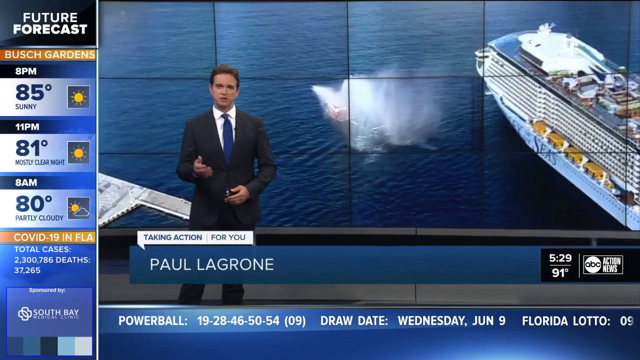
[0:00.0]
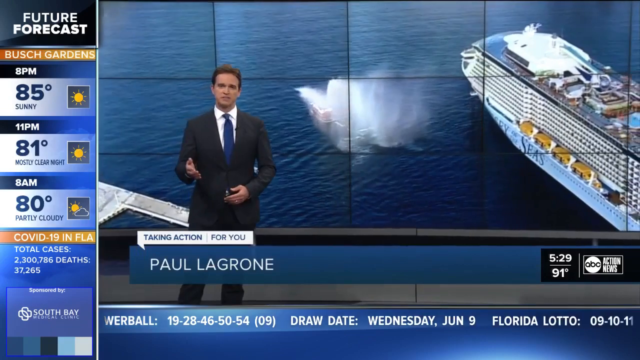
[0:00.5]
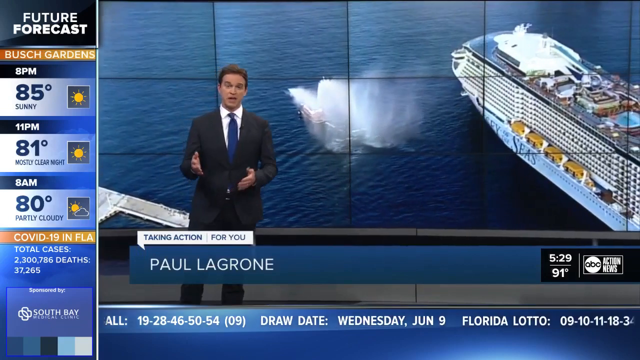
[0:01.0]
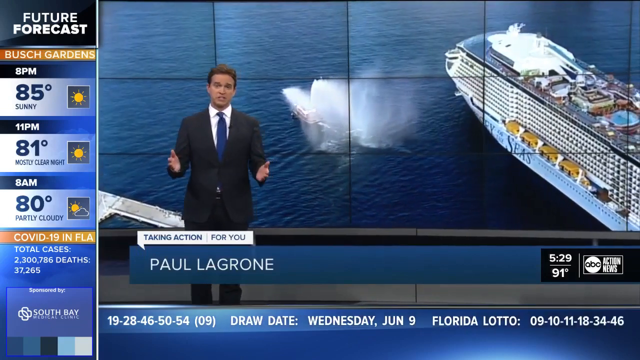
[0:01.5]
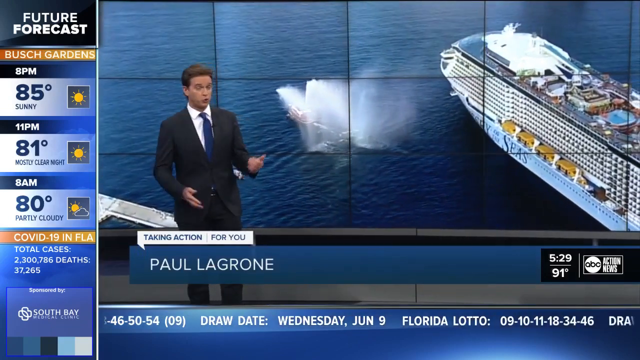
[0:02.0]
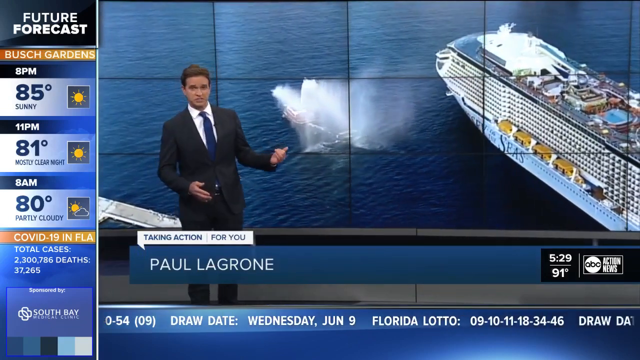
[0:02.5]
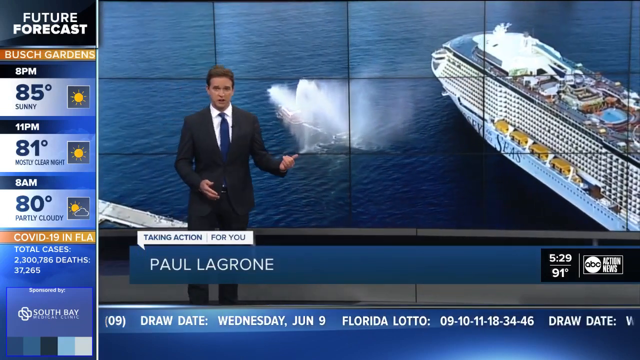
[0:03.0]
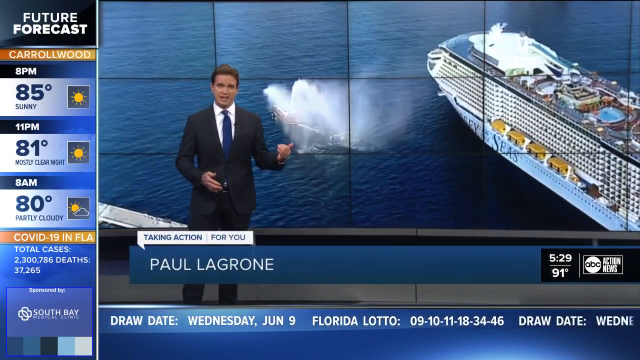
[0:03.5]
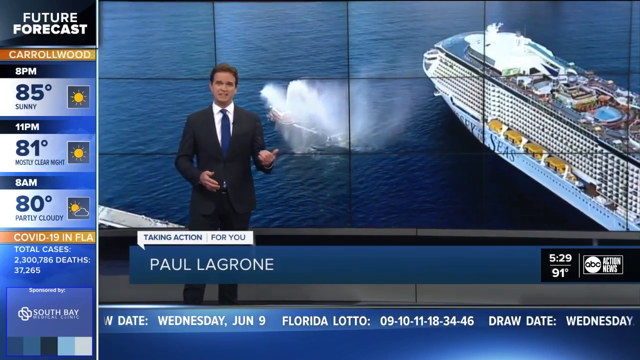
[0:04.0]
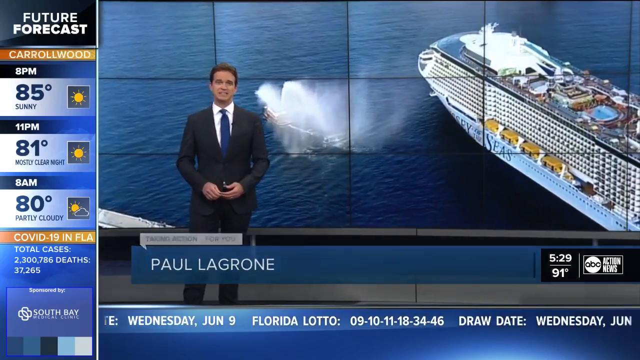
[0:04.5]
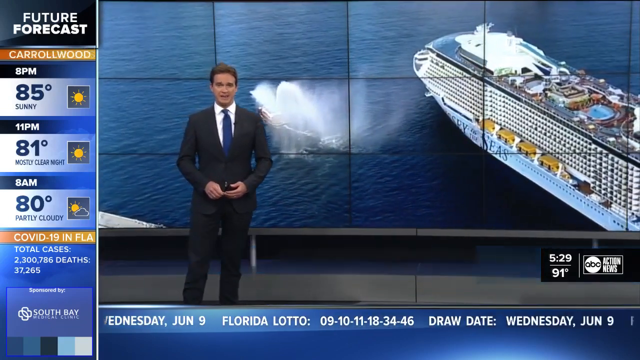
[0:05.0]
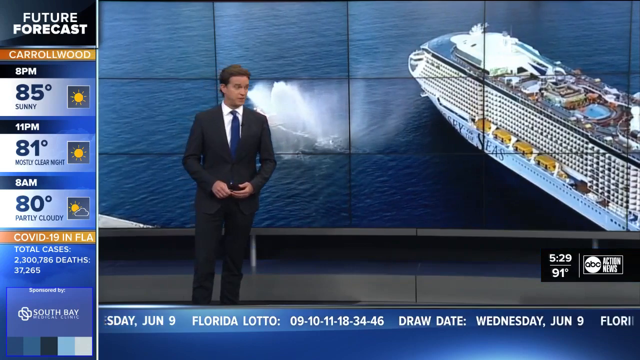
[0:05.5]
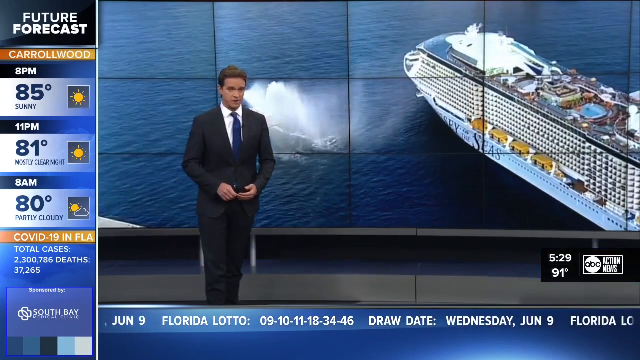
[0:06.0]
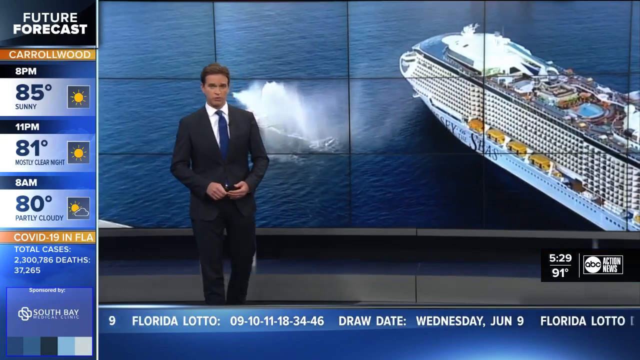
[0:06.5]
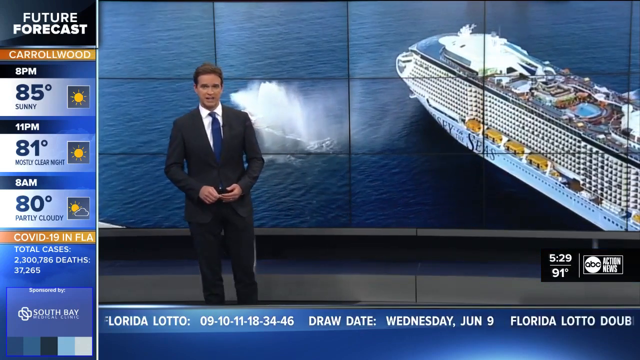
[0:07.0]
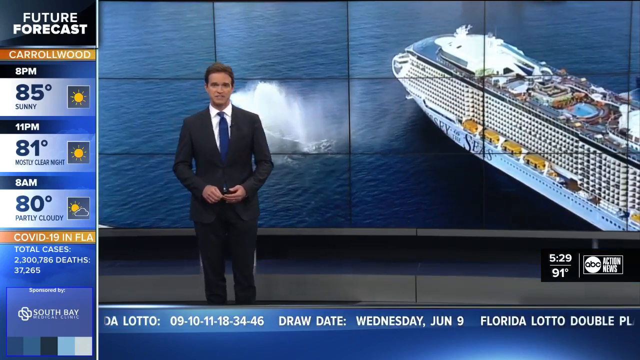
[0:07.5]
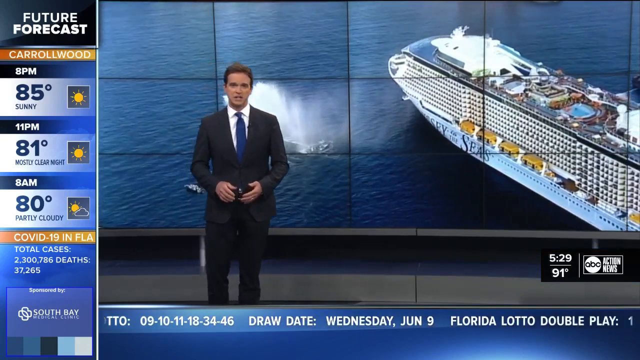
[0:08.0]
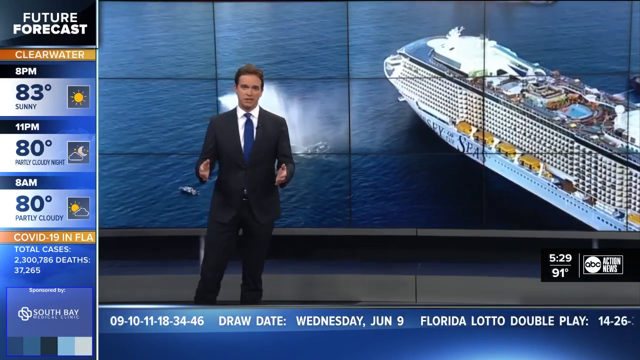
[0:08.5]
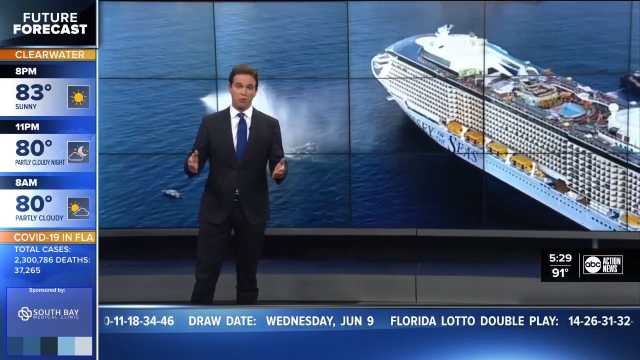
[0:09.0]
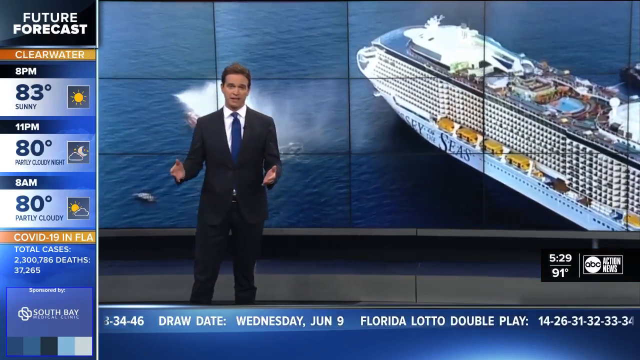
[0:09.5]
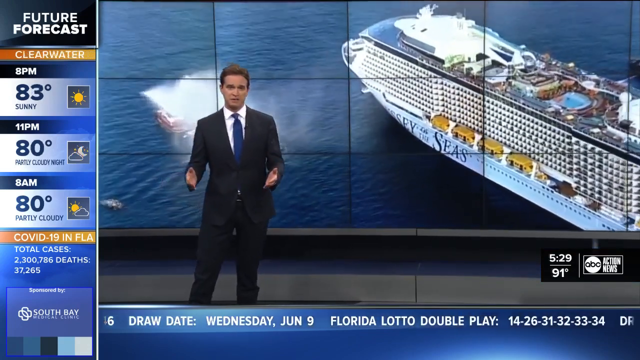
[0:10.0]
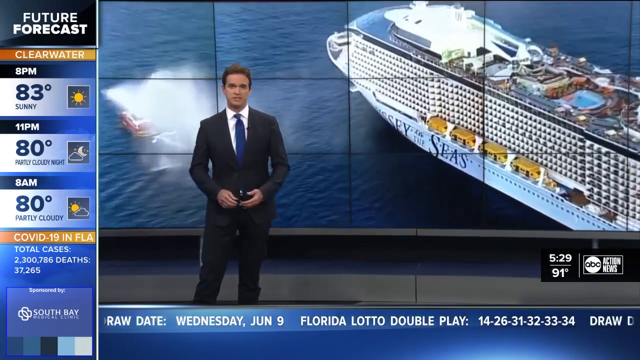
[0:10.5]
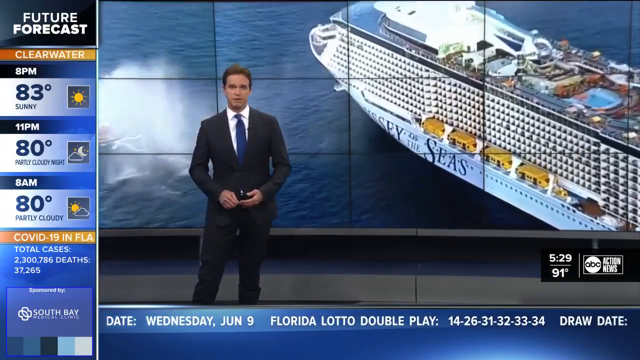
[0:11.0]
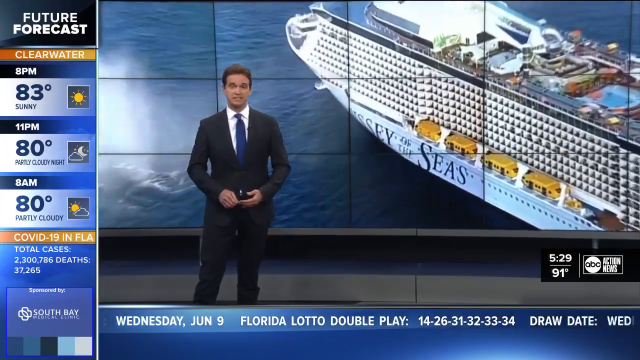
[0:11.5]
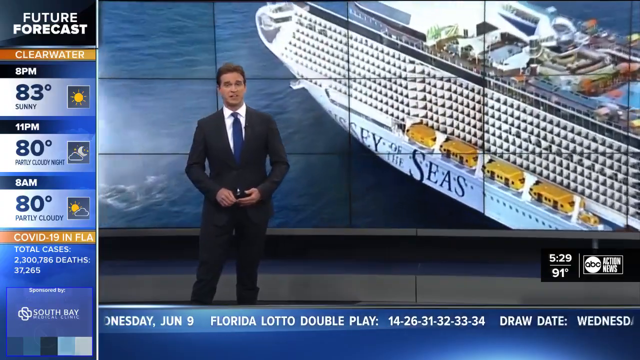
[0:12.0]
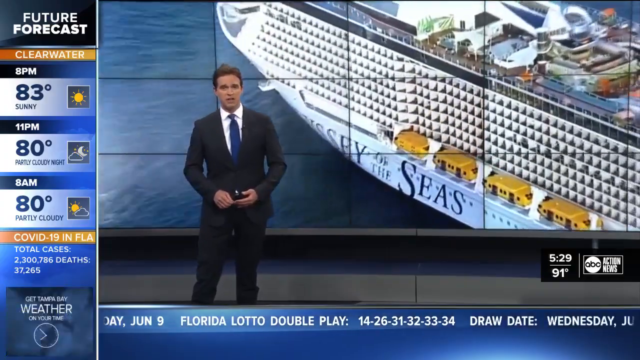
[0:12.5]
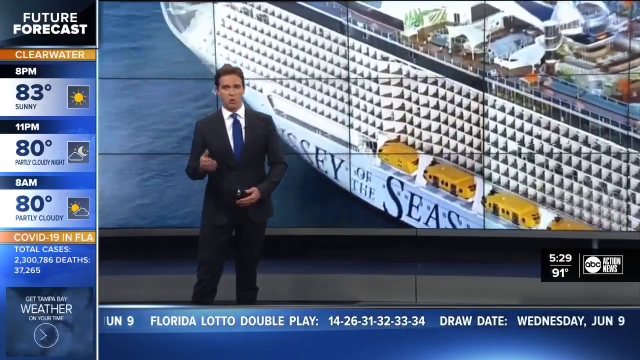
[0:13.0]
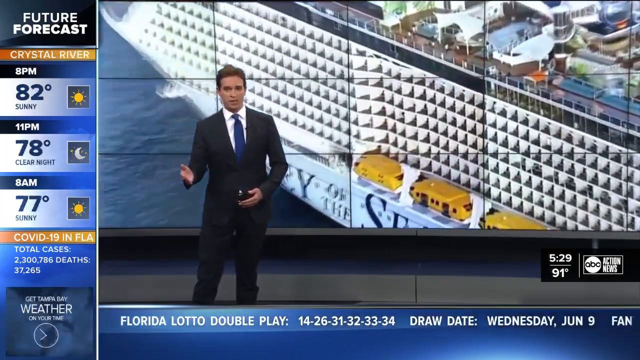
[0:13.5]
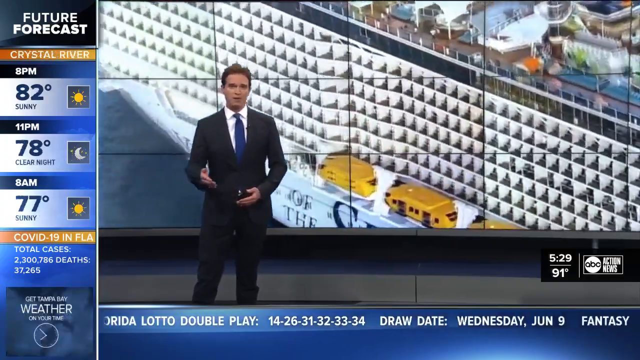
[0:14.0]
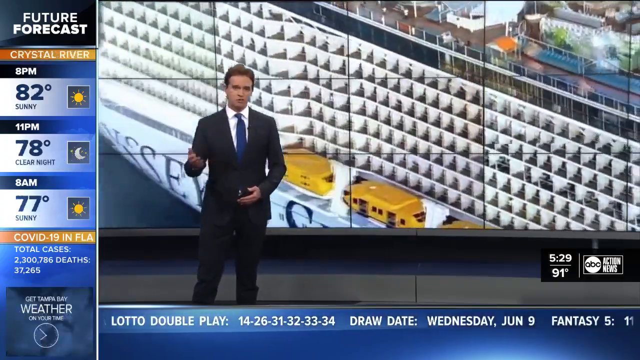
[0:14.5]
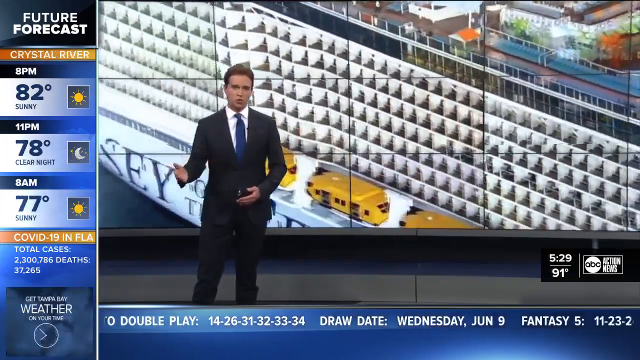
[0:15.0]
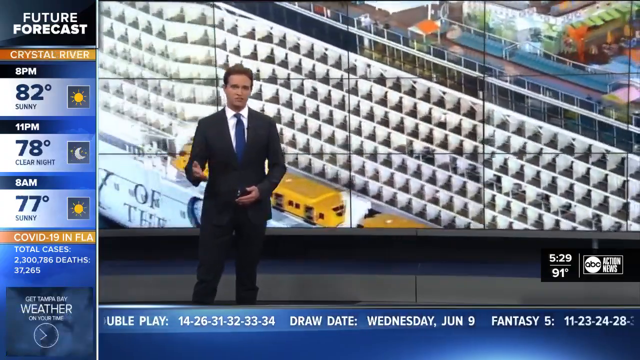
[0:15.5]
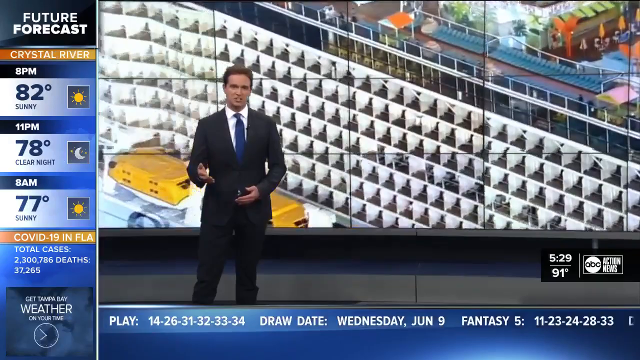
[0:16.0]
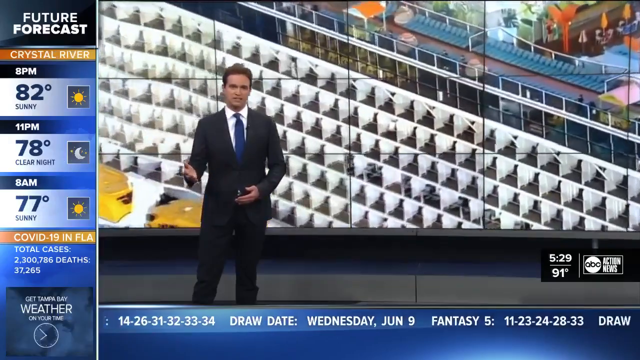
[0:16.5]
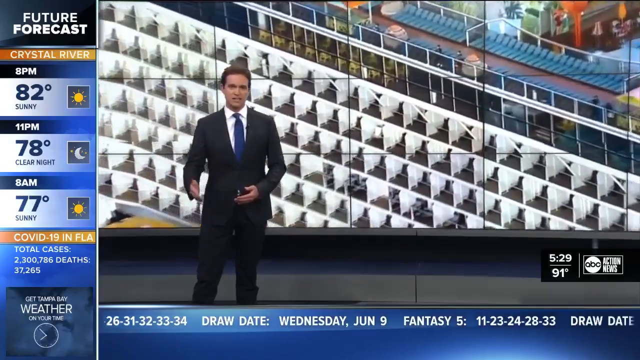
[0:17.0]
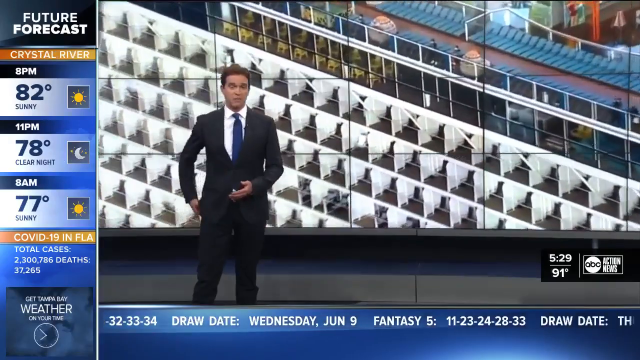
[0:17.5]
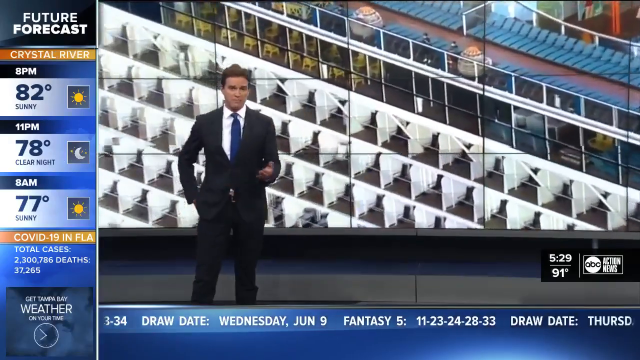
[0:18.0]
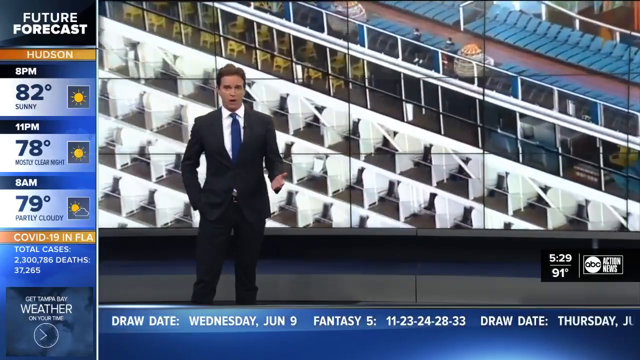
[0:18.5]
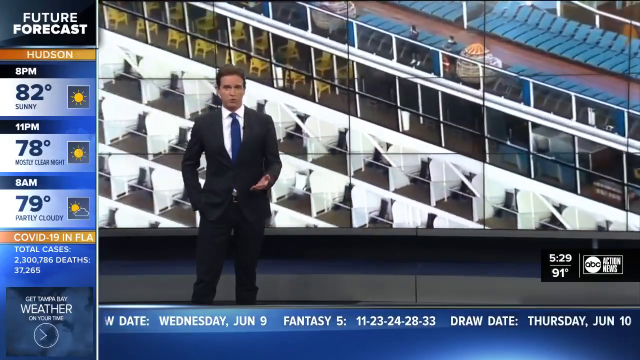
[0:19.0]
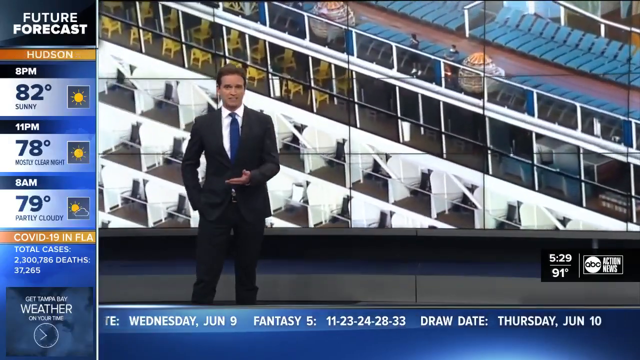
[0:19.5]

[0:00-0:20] A news anchor appears in front of a bank of screens in the background showing a ship, apparently a cruise ship, with "odyssey of the seas" written on it; it has many apartments, and the view is of its top. In the bottom right is "ABC Action News". On the left is a "future forecast" for "Busch Gardens": "8 p.m.", "85 degrees", sunny, next to a sun icon, and "11 p.m.", "81 degrees", "mostly clear night", next to a sun icon. Below that are "Powerball numbers" with a "draw date" of "Wednesday, June 9th", "Florida Lotto numbers" 09, 10, 11, 18, 34, 46 with a draw date, "Florida Lotto double play" with a draw date, and "fantasy five". In the bottom left is "COVID-19 in Florida", with total cases "2,307,86" and deaths "37,265". The anchor wears a dark grey suit, a white shirt and a blue tie.